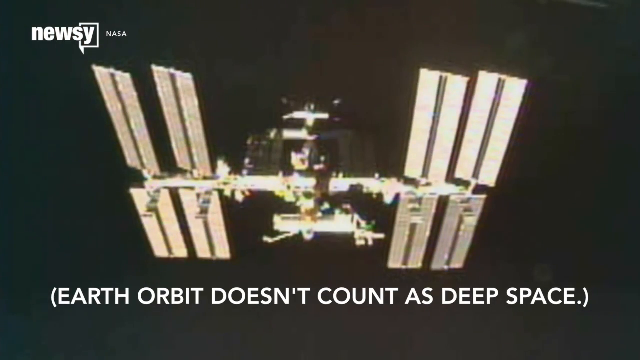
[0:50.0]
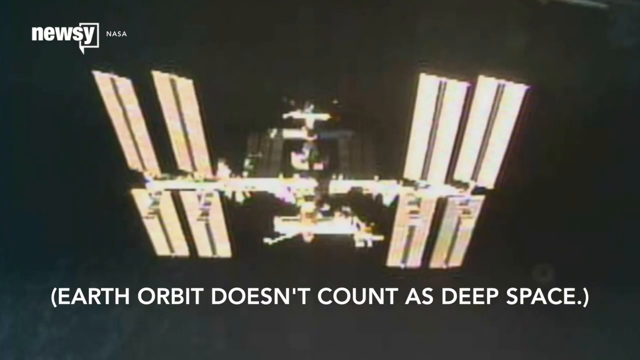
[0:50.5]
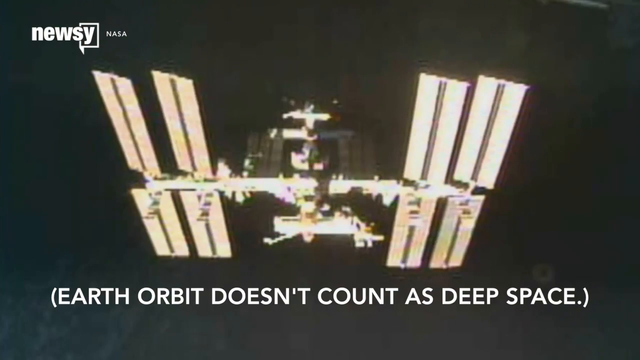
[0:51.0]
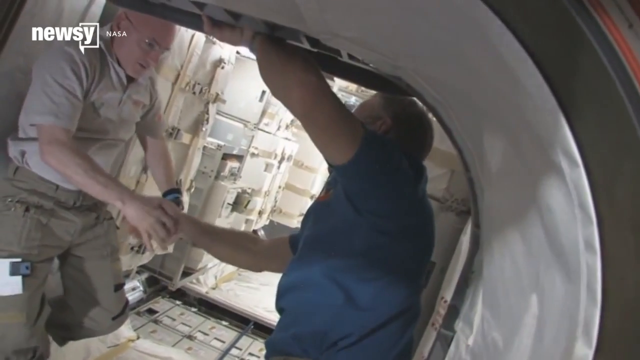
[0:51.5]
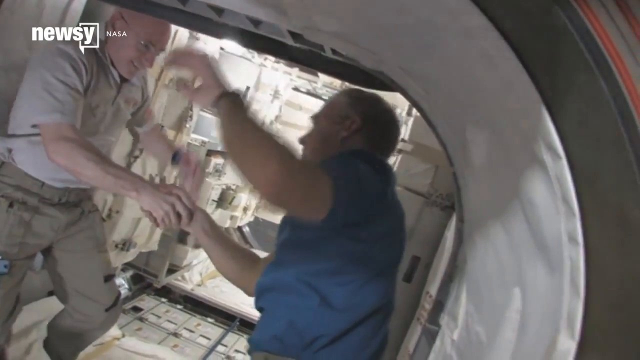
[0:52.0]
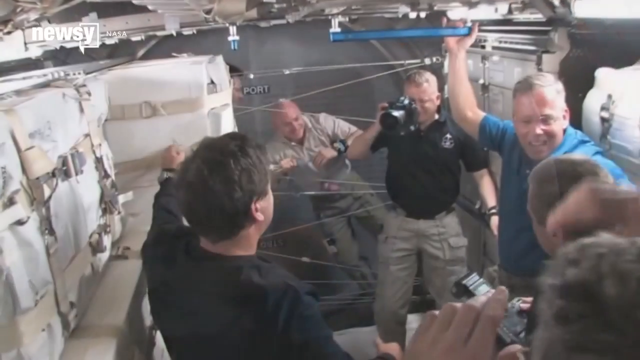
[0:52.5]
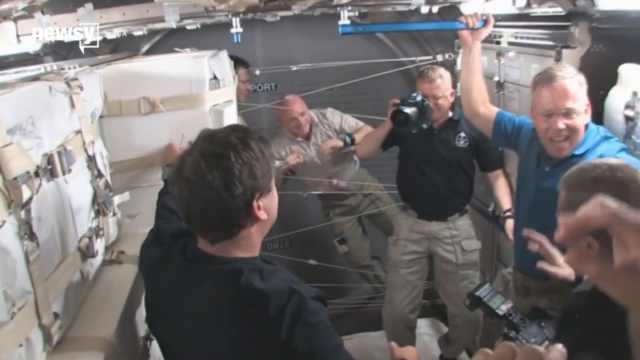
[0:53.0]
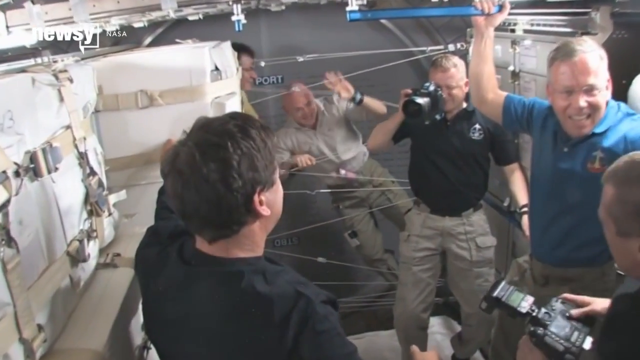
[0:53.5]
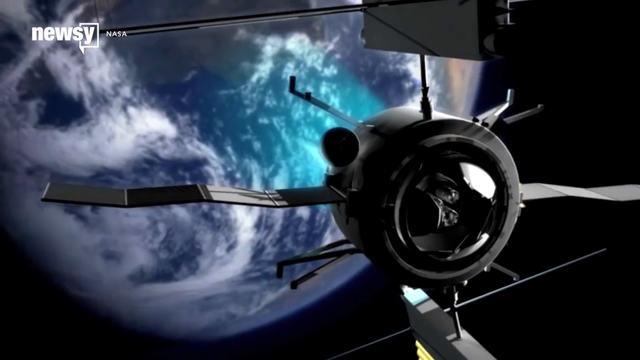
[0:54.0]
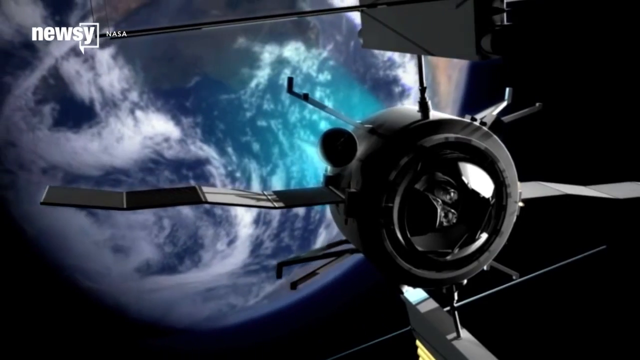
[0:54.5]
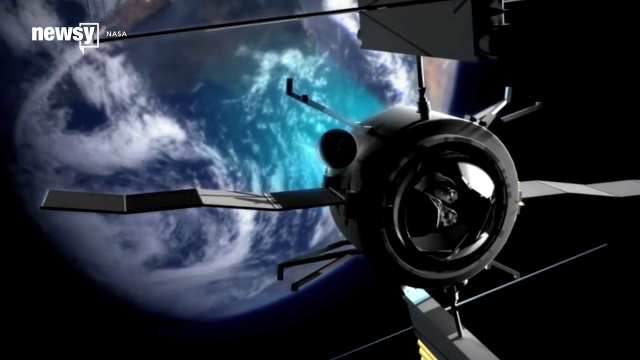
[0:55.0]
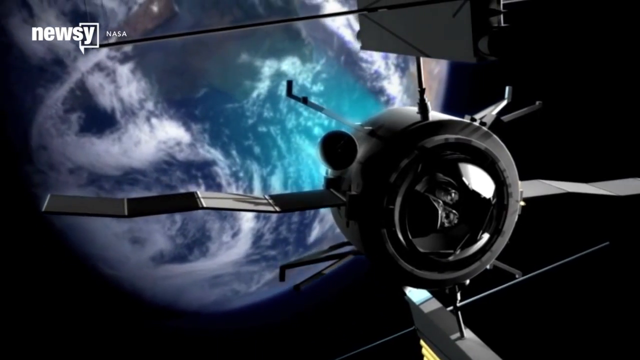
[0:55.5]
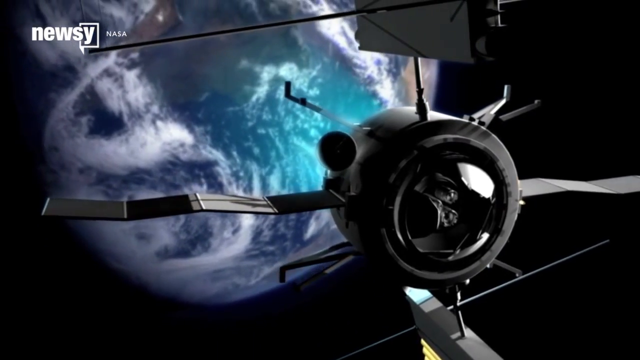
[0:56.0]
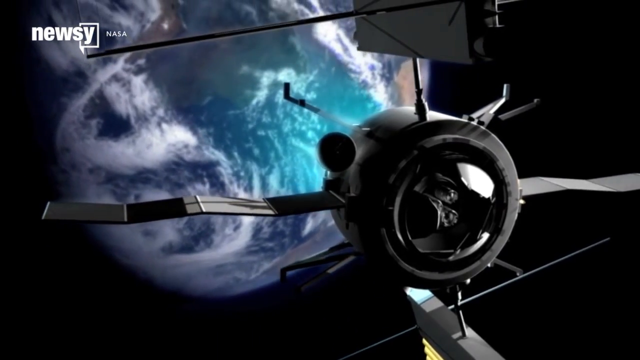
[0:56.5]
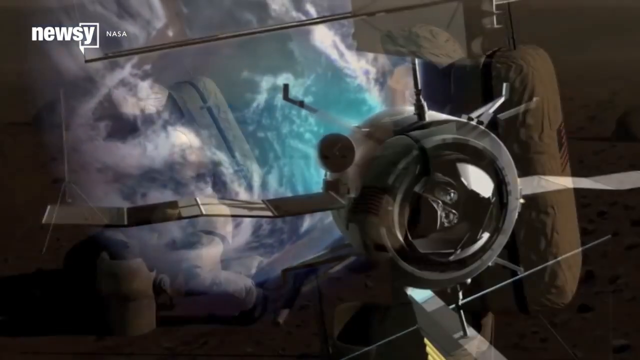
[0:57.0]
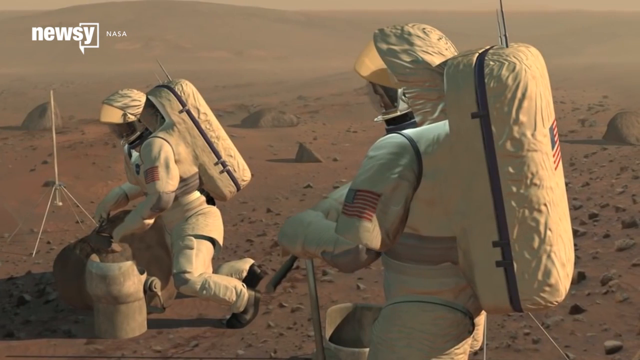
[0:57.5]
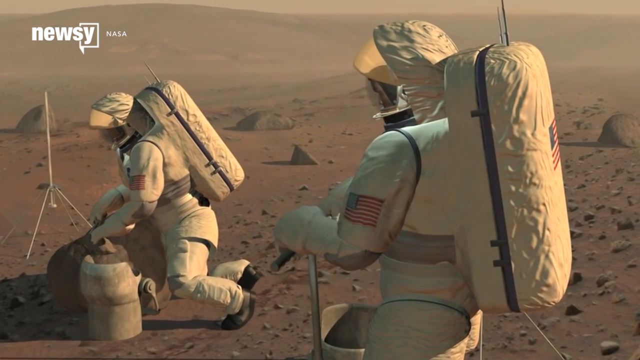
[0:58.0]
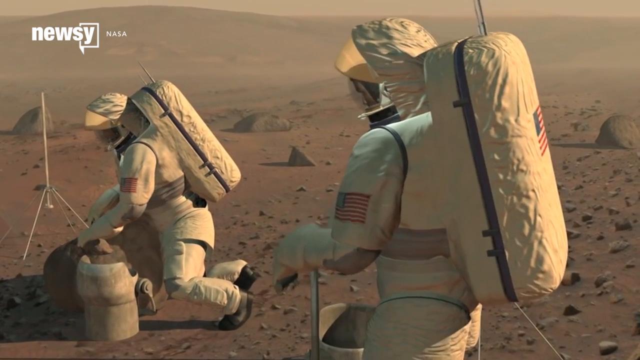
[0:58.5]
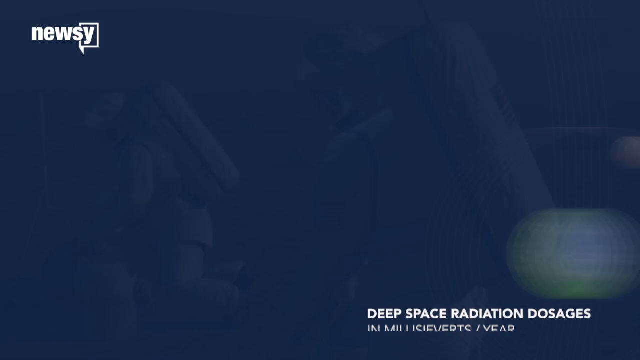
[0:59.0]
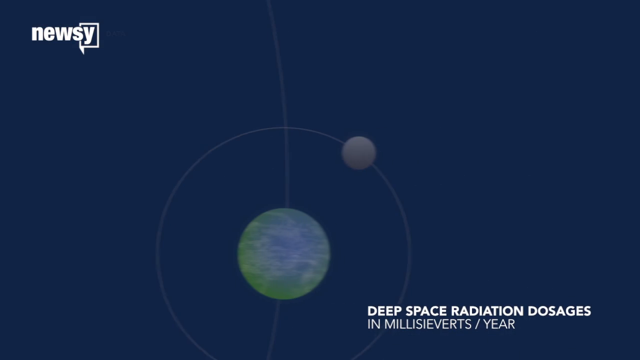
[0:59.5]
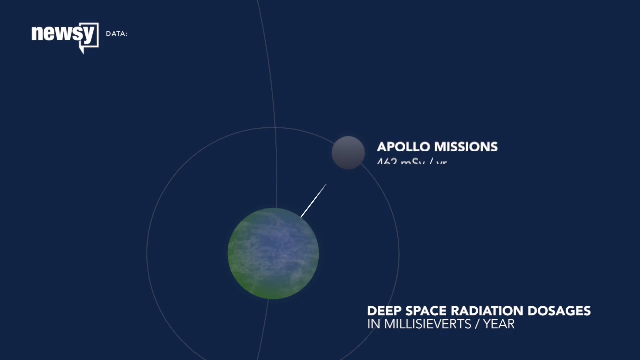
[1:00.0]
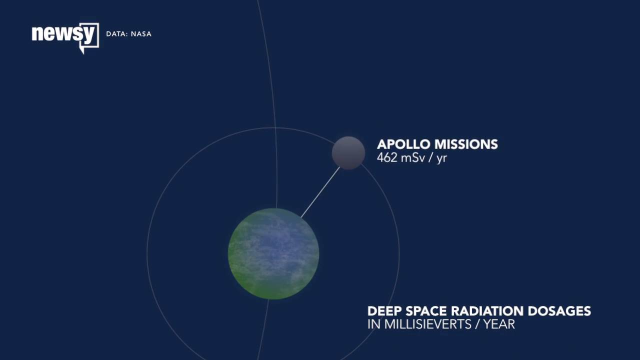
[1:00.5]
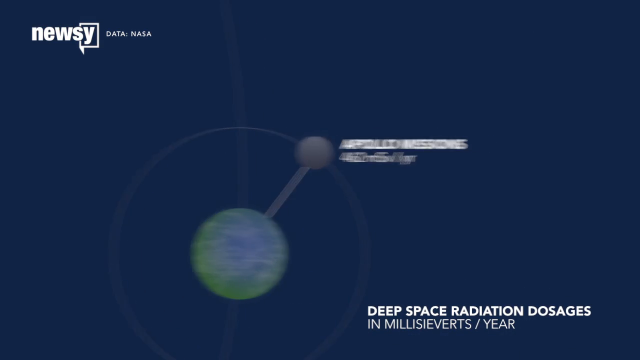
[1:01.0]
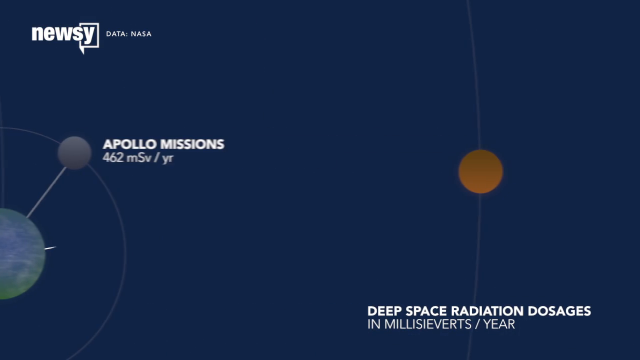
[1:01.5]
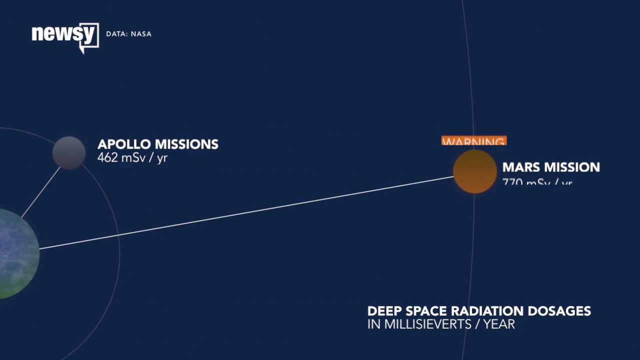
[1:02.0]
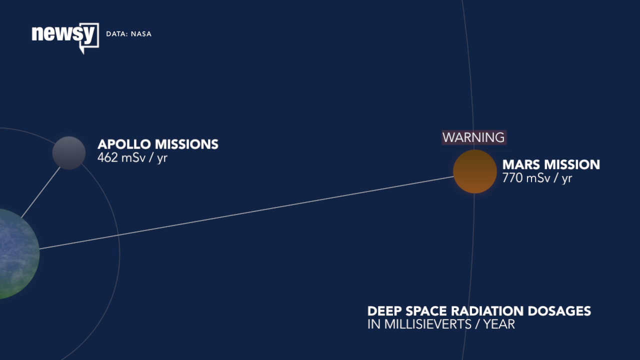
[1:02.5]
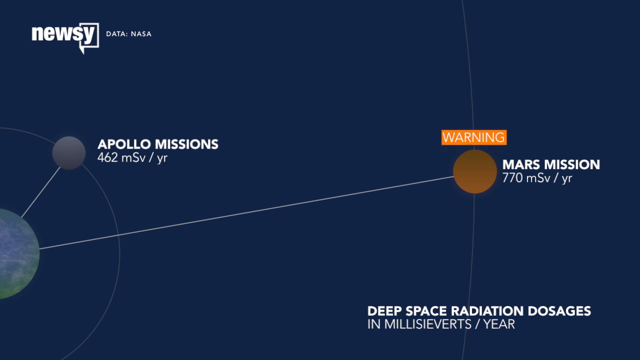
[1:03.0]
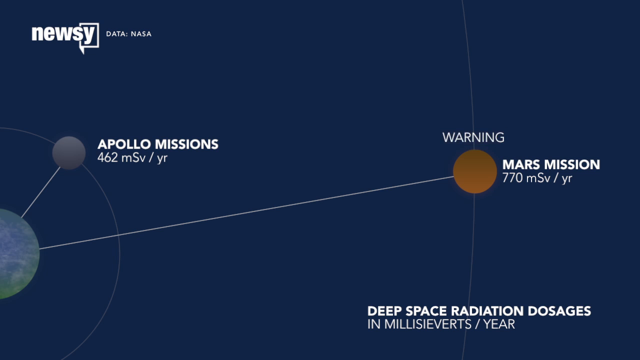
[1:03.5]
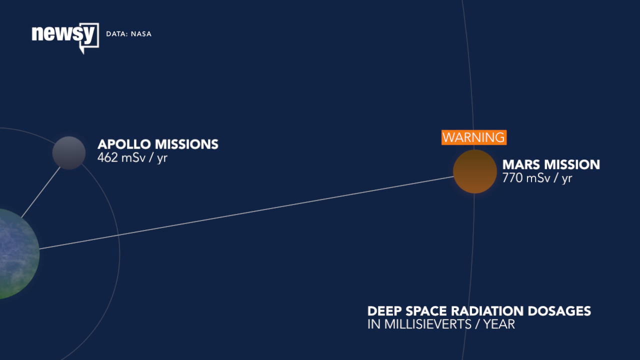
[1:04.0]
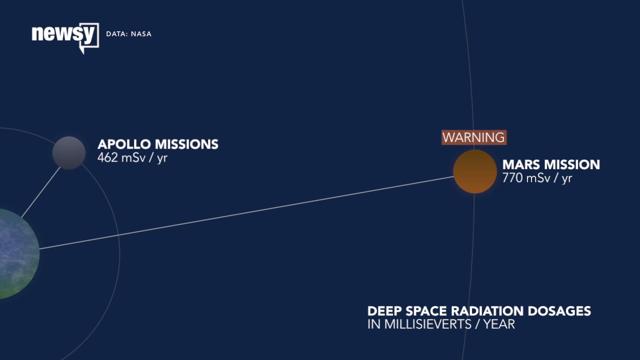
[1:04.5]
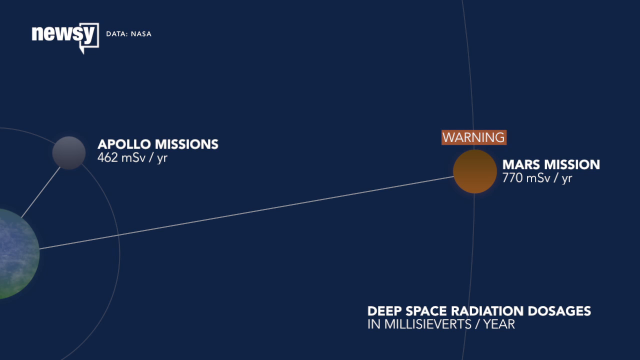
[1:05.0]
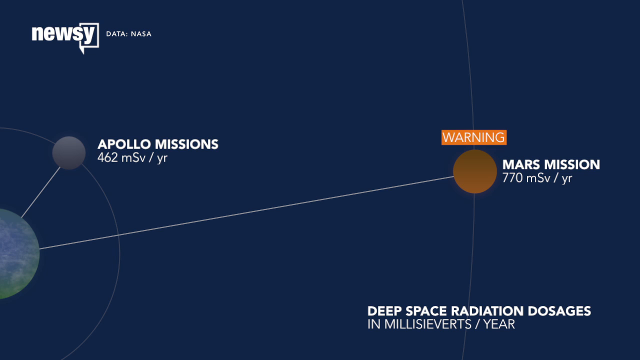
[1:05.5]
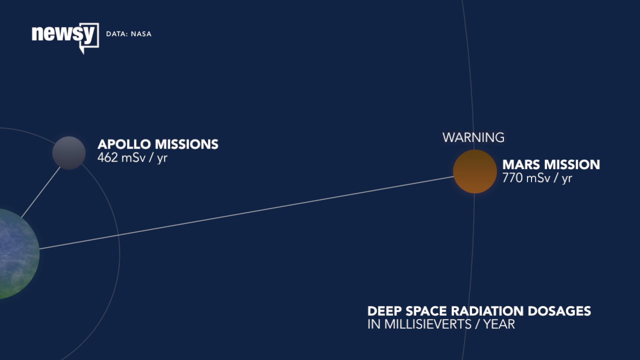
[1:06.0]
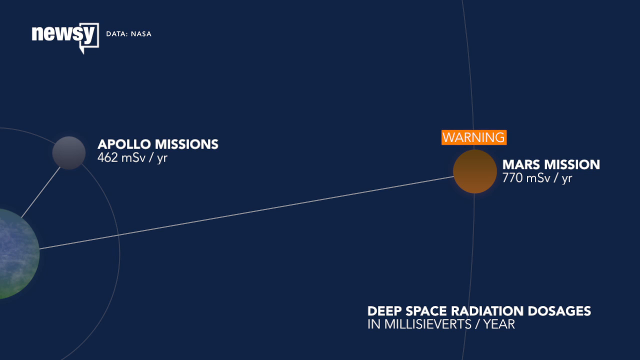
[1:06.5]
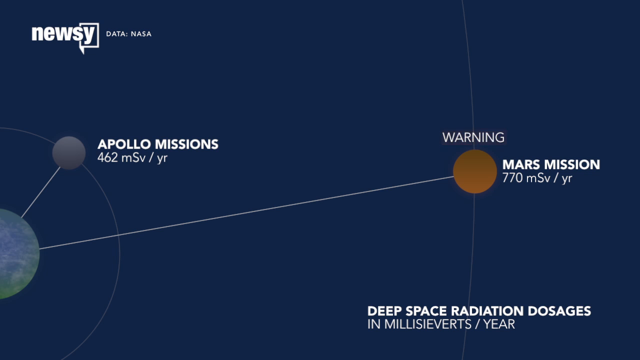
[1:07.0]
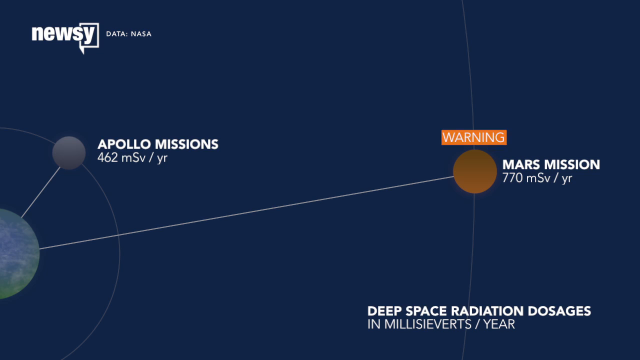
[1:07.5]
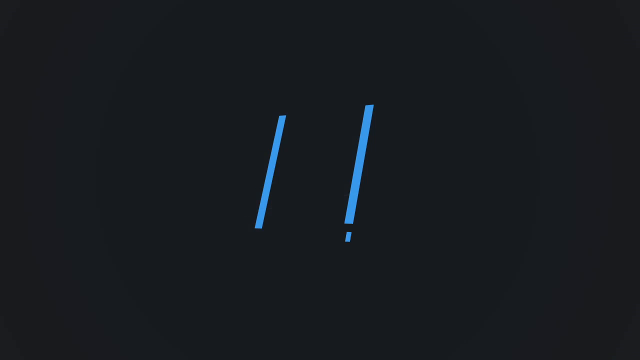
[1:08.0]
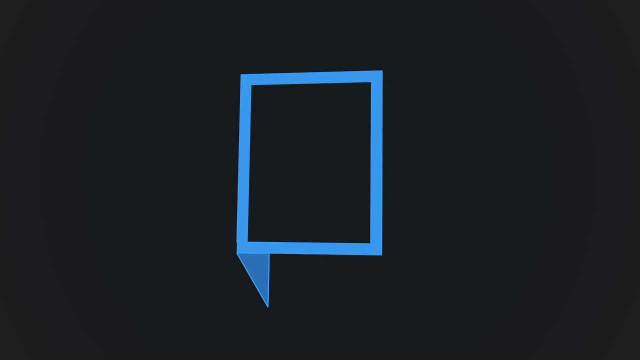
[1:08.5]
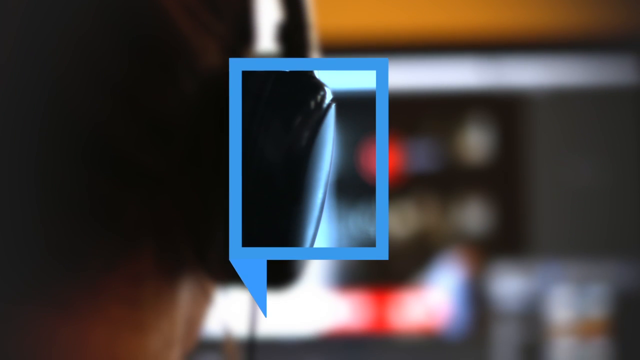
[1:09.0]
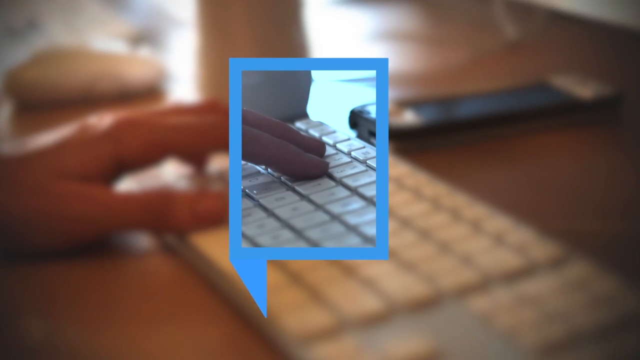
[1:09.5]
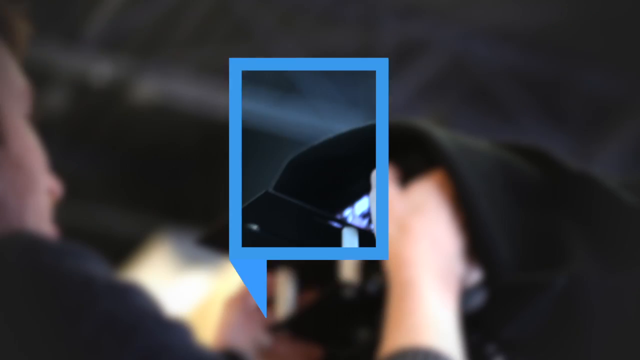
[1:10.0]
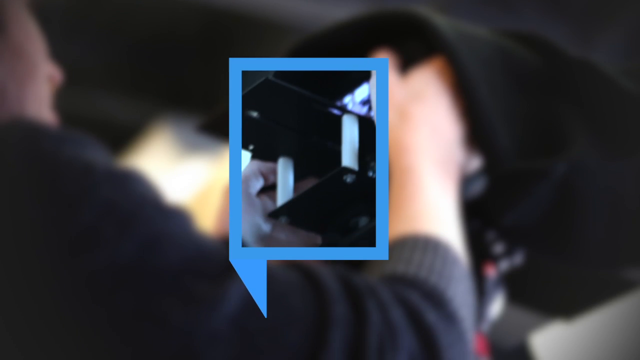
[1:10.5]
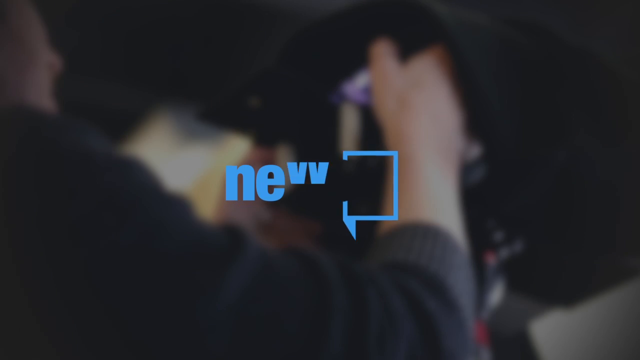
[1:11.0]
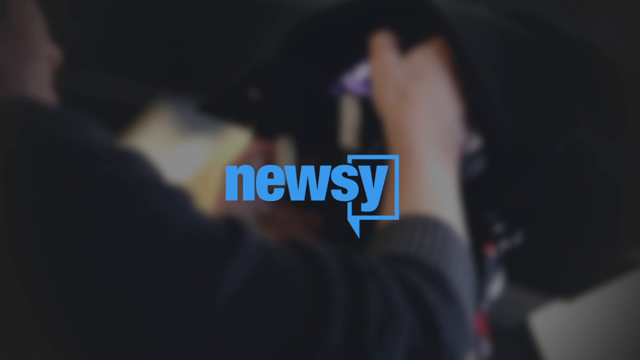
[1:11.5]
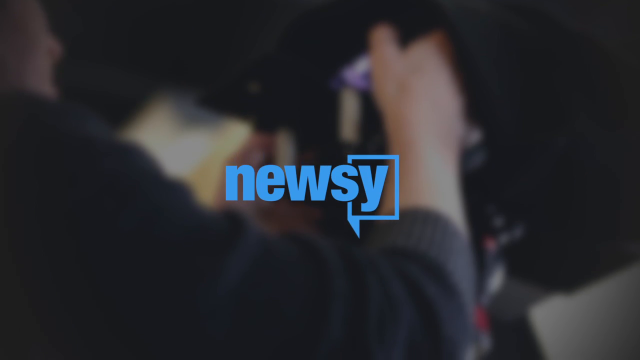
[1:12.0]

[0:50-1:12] This Newsy NASA video shows astronauts out of uniform in a group. One of them has a camera, and they take pictures of each other. A string of wire goes across between them, and they look like they are celebrating. One of them parts the wire and kind of peeks through it. A black spaceship is then seen orbiting away from the Earth. The astronauts are on the moon in their astronaut gear, setting up things on the surface. Then an Apollo map appears, showing what they will be doing, with the text "deep space radiation dosages in millisieverts per year" in the bottom right corner. The Apollo Missions screen is shown with an orange blinking warning sign above Mars.